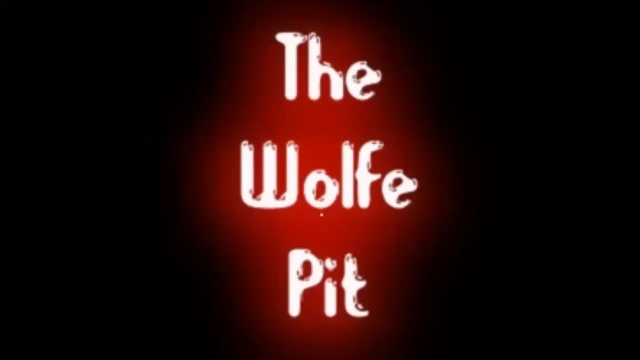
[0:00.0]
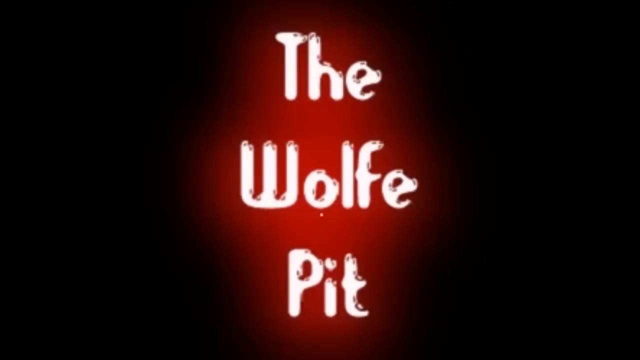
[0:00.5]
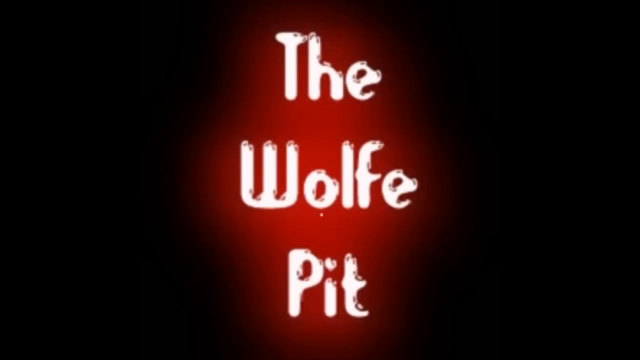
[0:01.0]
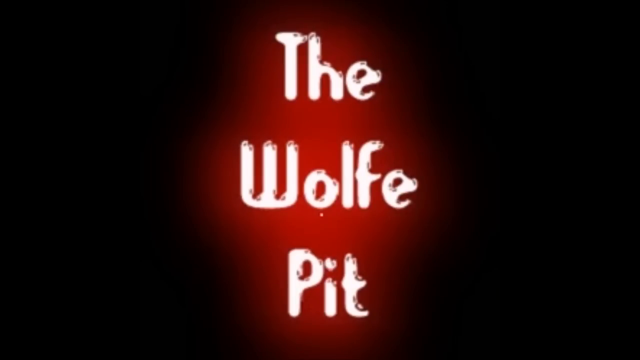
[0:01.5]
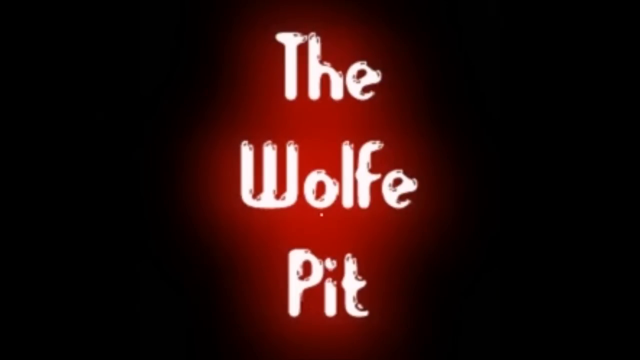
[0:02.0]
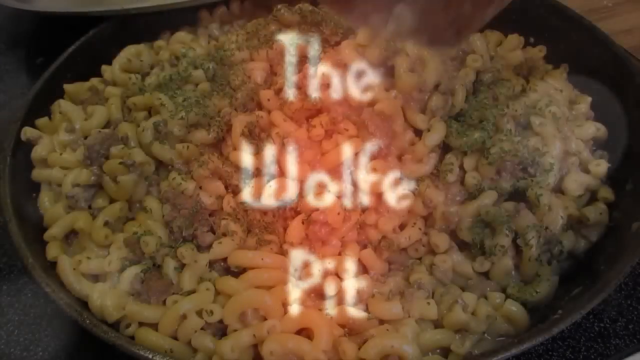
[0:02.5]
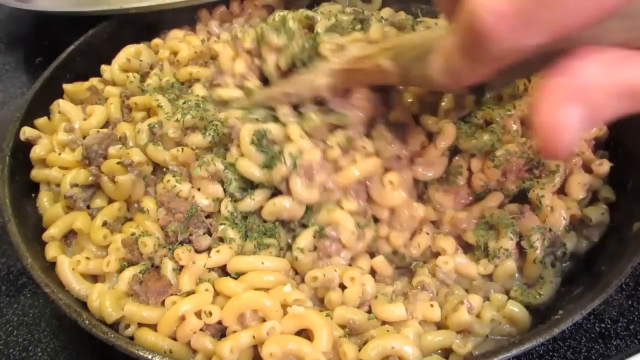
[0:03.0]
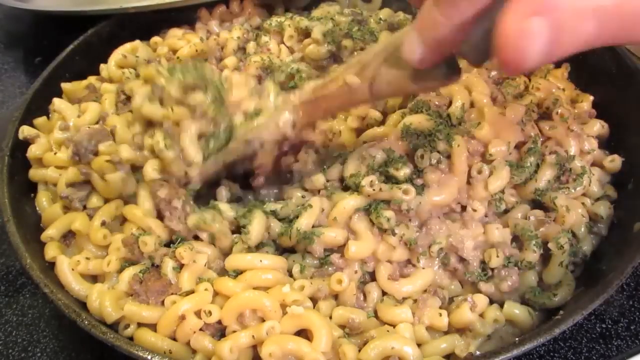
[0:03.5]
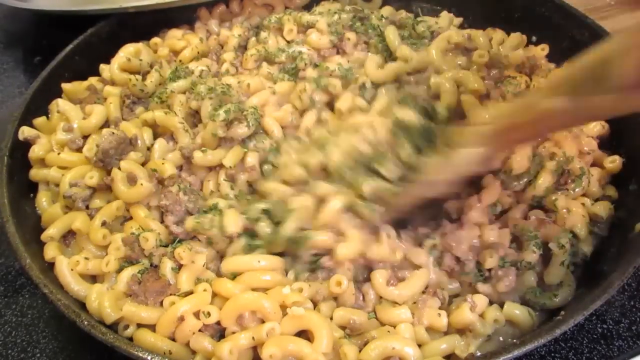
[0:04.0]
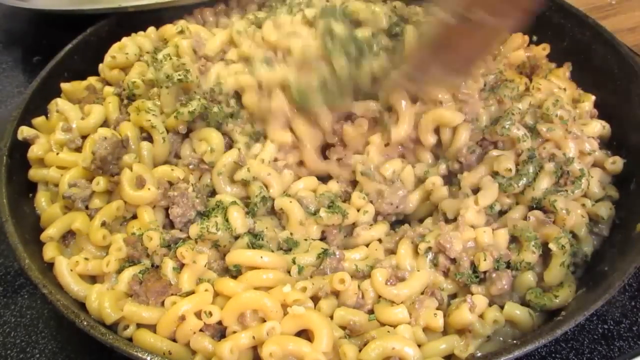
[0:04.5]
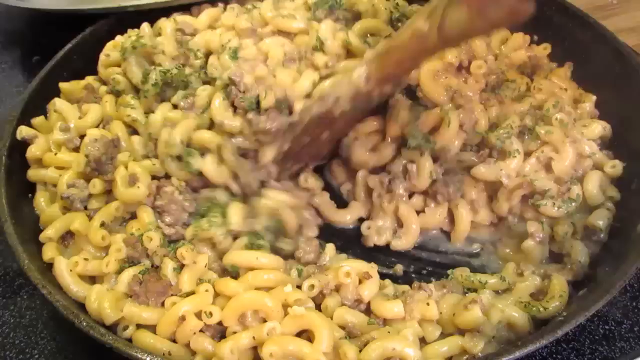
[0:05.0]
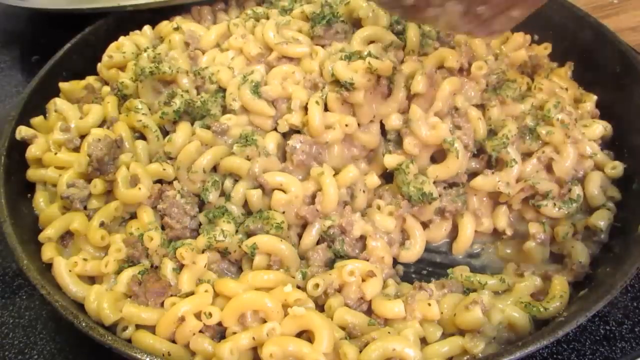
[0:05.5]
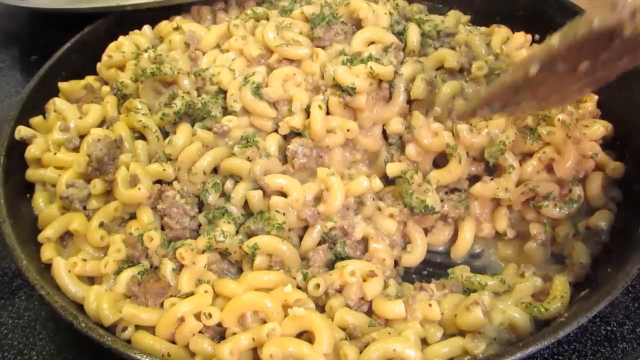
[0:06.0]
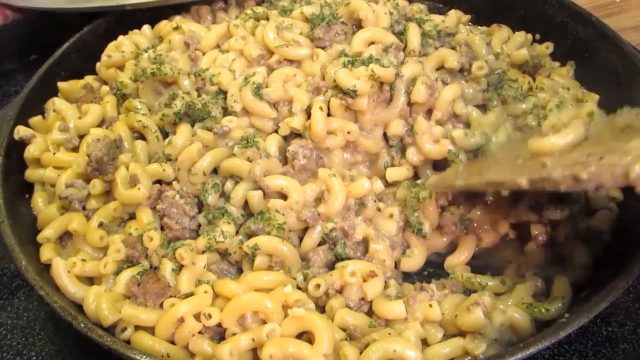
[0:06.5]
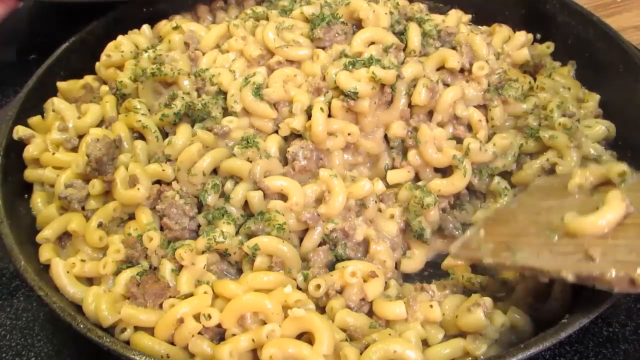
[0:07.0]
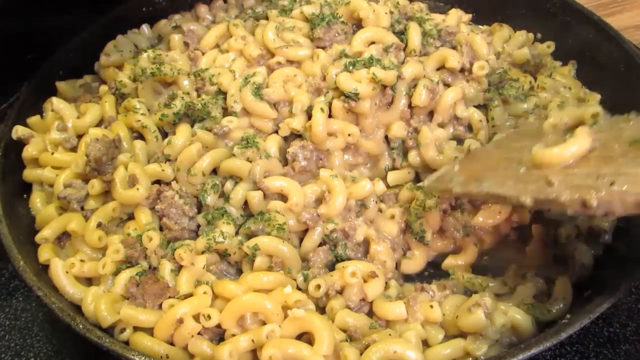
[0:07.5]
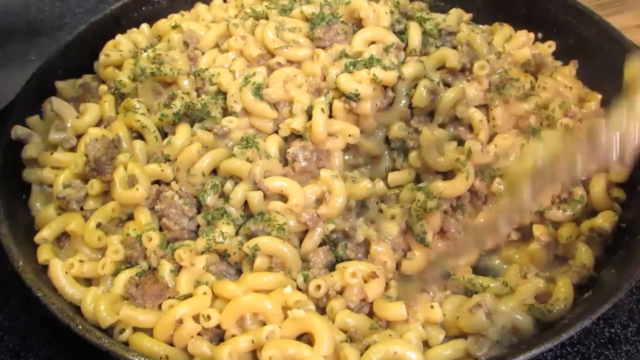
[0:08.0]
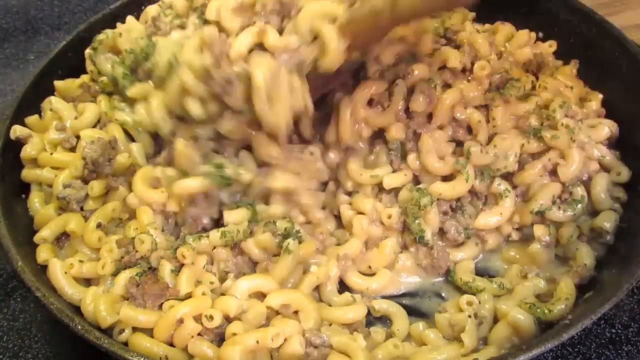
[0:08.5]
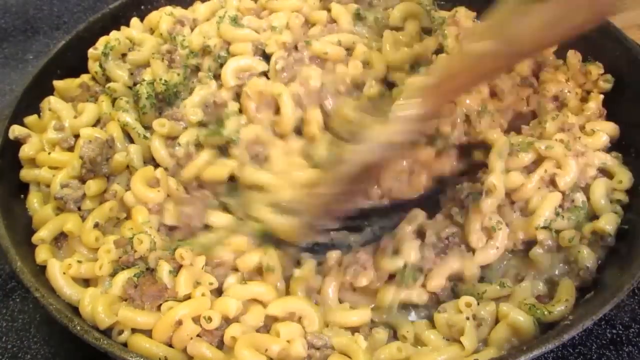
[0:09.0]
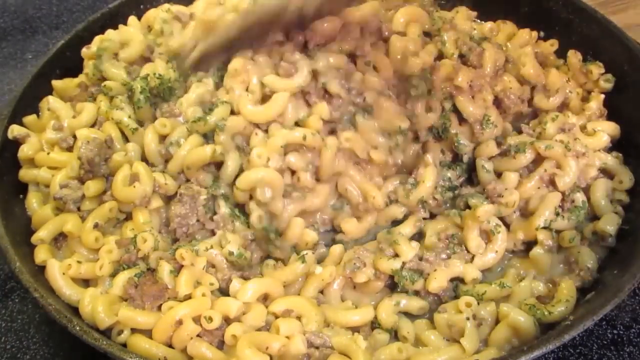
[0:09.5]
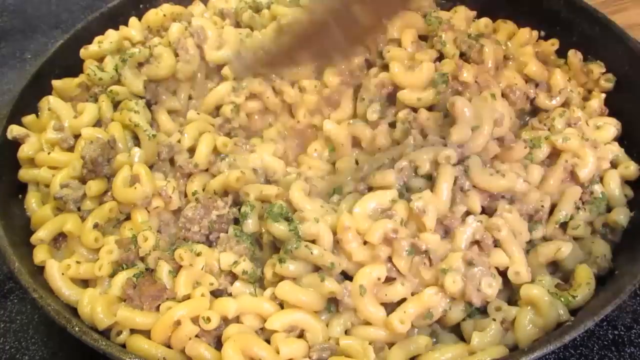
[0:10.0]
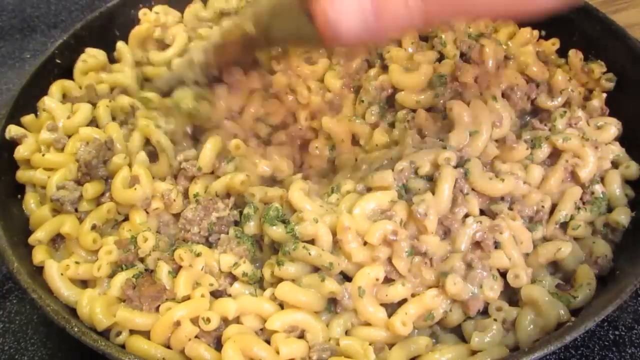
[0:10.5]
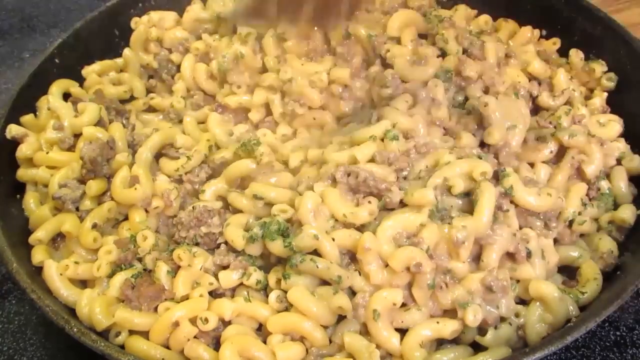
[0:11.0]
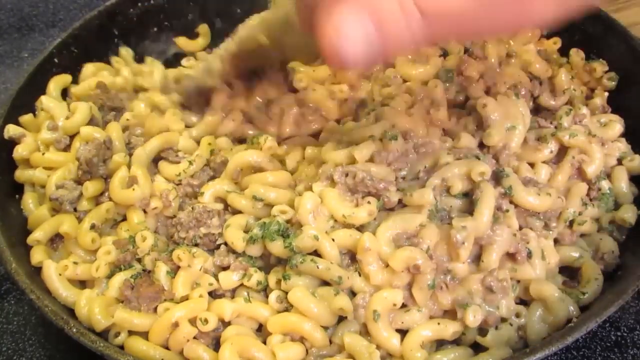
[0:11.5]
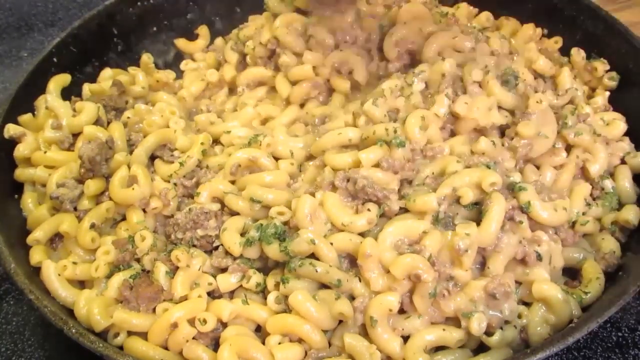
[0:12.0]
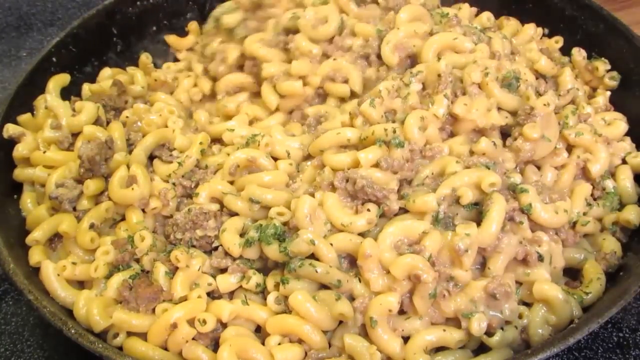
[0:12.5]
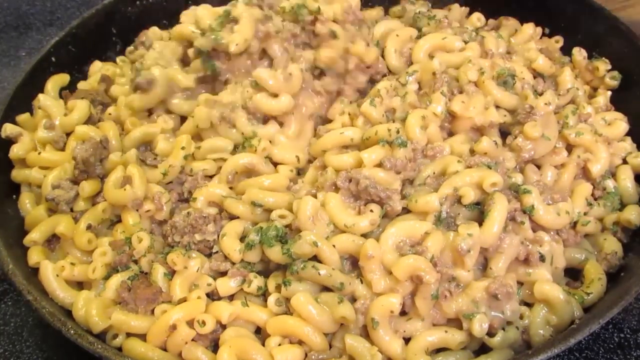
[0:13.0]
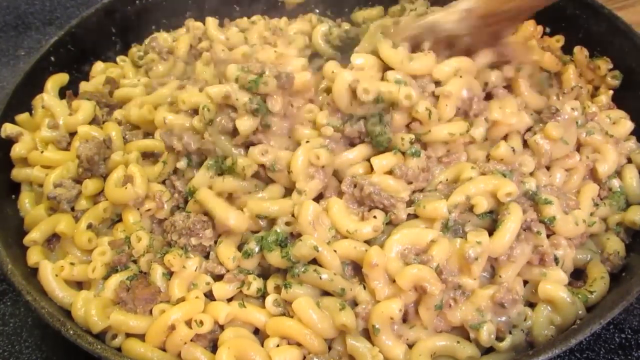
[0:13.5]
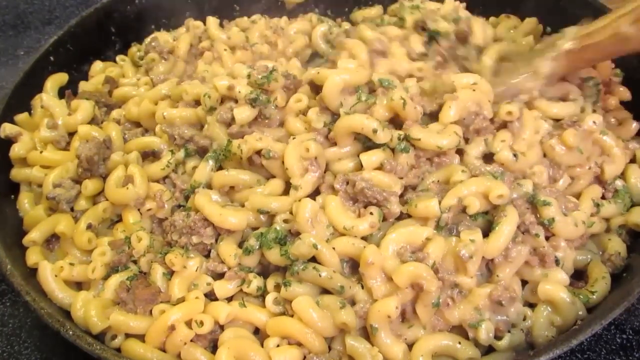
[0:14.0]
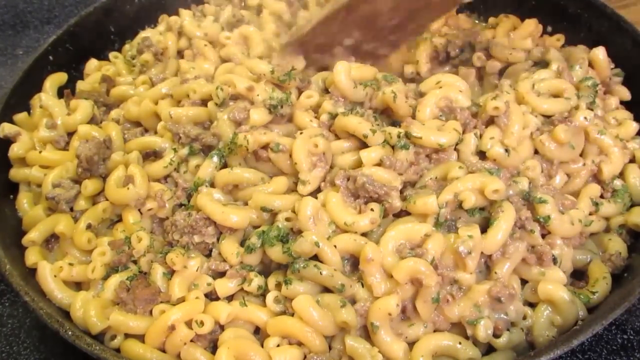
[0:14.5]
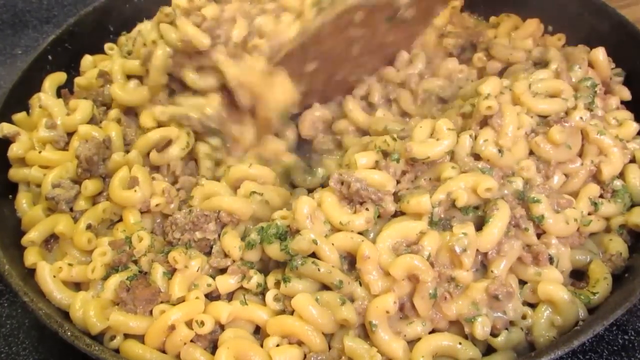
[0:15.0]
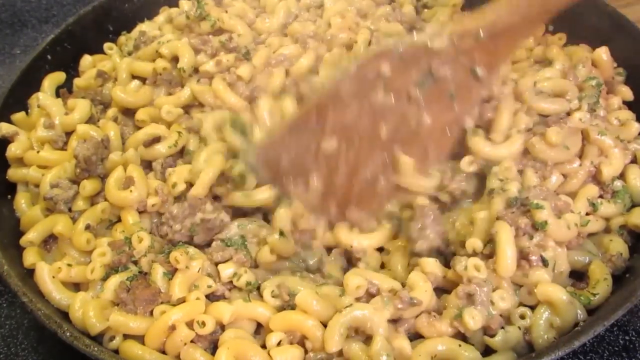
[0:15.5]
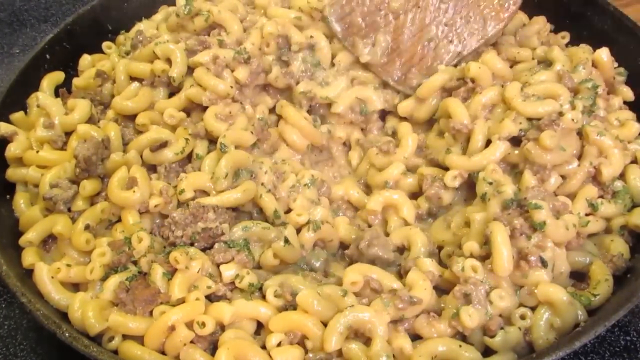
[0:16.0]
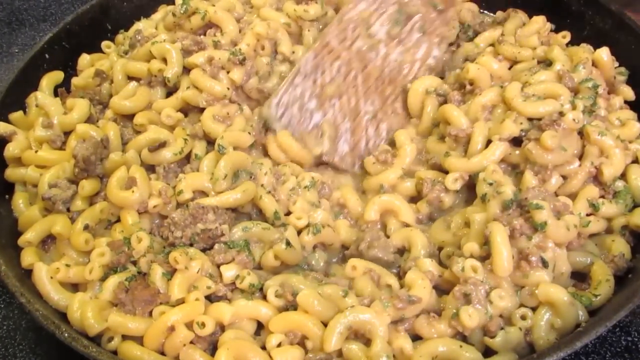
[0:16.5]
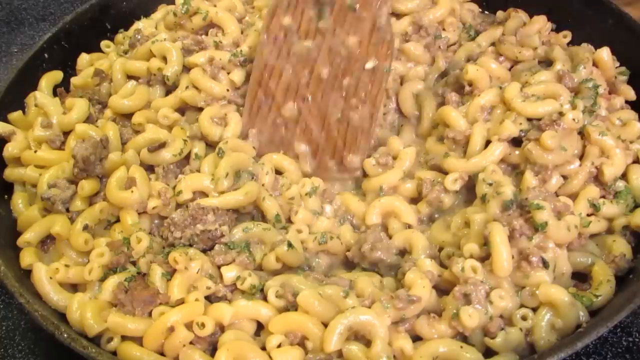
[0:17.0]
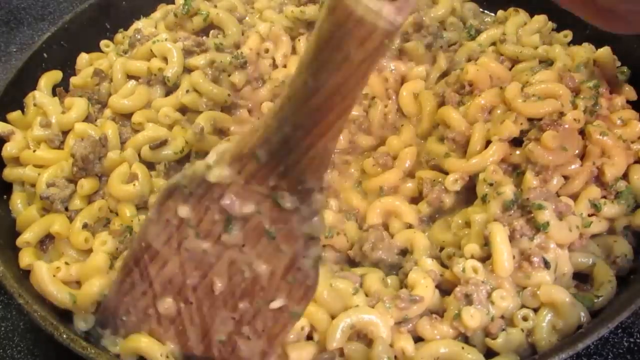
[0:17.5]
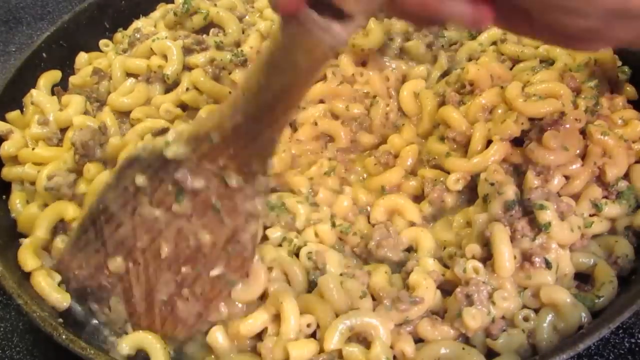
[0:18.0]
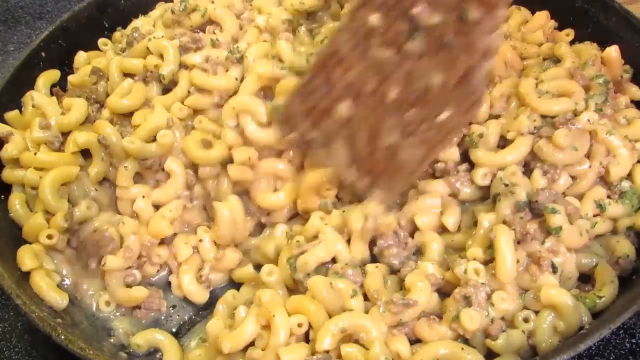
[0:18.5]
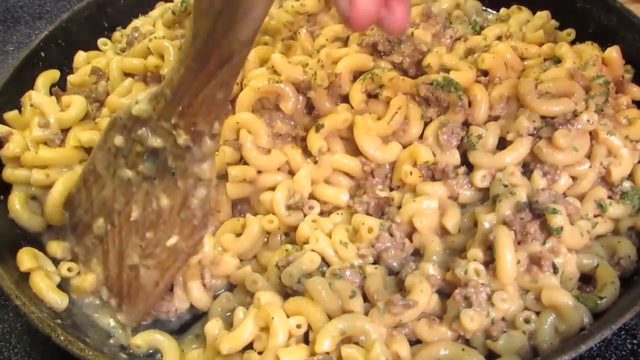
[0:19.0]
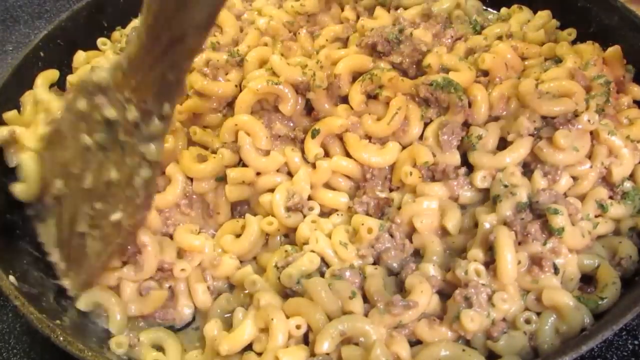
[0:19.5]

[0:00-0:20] The video opens with big white letters in the center of a red, flame-like background, surrounded by black; the text names the wolf, with an E at the end of "wolf". Immediately after, someone is cooking a type of macaroni in a big pan. It looks like it is in sauce, and she is mixing in a brown ingredient that could be minced meat, along with a green sprinkling of spices. The mixing is done with a wooden spoon, like a spatula. The macaroni looks very saucy, and the pan is on the stove, simmering a bit. The macaroni appears to have been cooked before being mixed with the sauce and the other ingredients in the pan, and it looks soft and ready to eat.